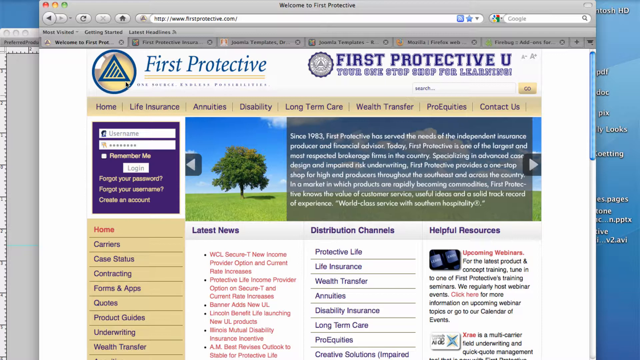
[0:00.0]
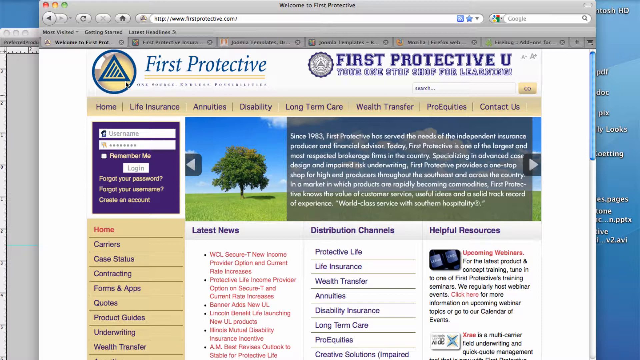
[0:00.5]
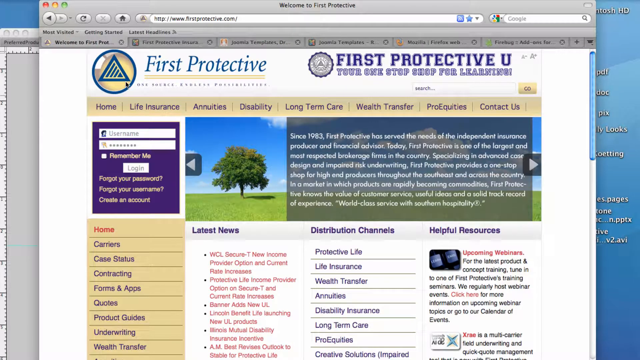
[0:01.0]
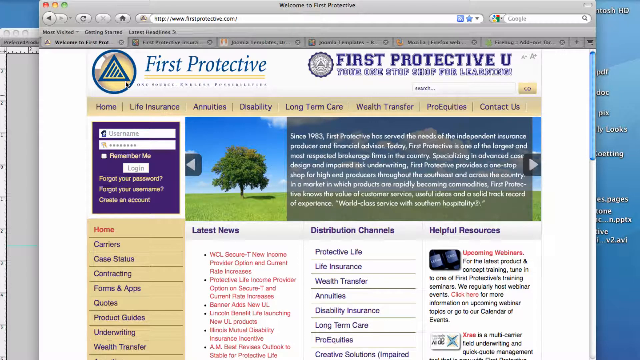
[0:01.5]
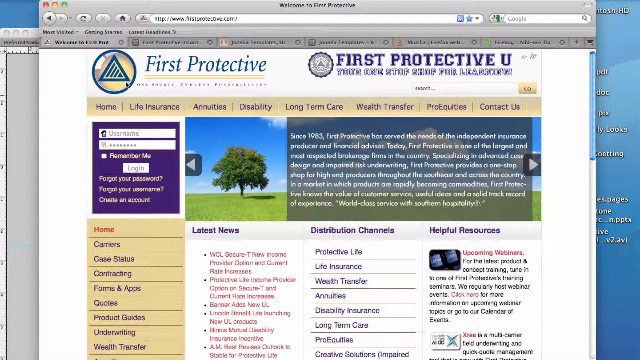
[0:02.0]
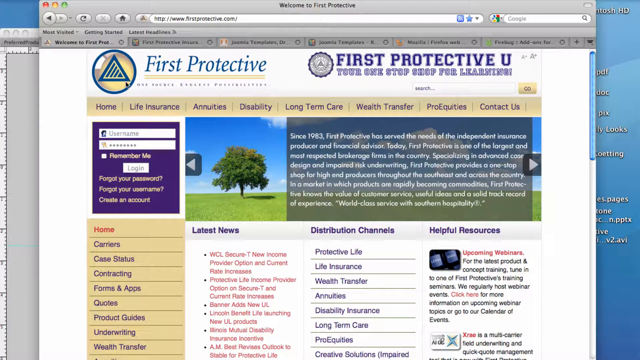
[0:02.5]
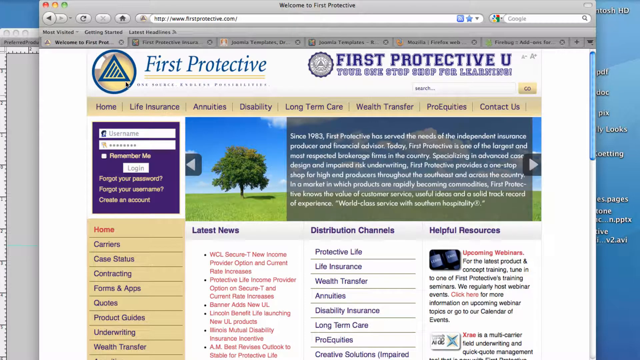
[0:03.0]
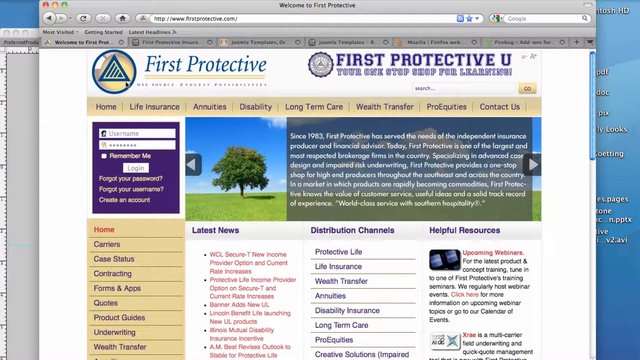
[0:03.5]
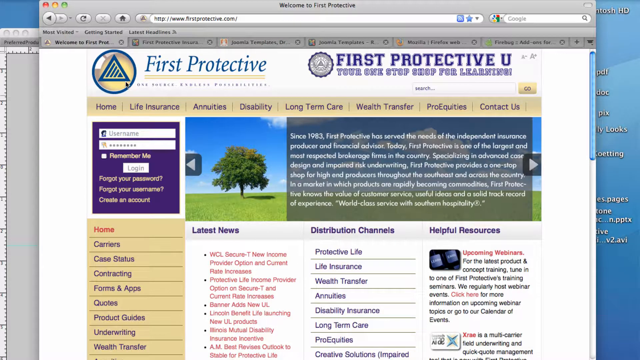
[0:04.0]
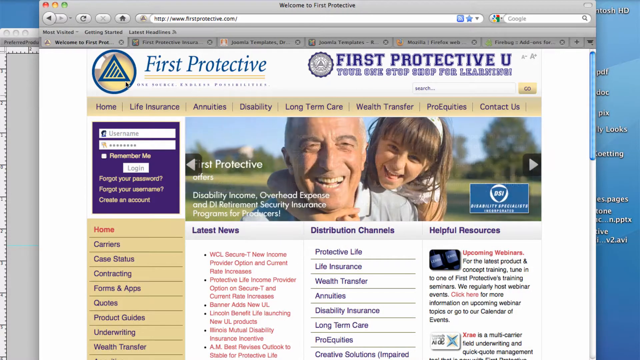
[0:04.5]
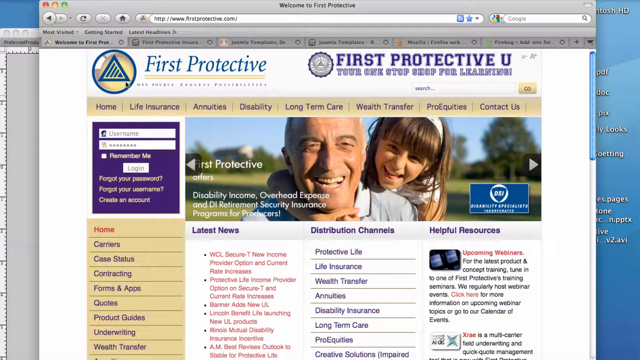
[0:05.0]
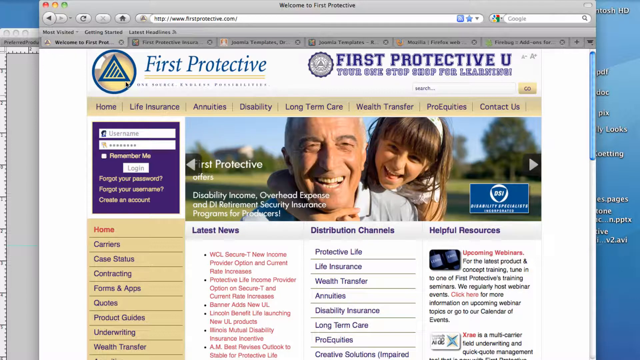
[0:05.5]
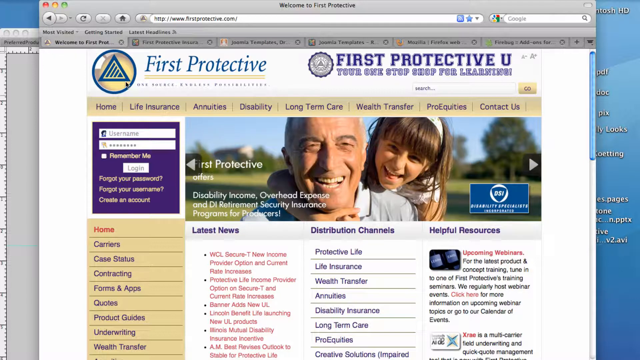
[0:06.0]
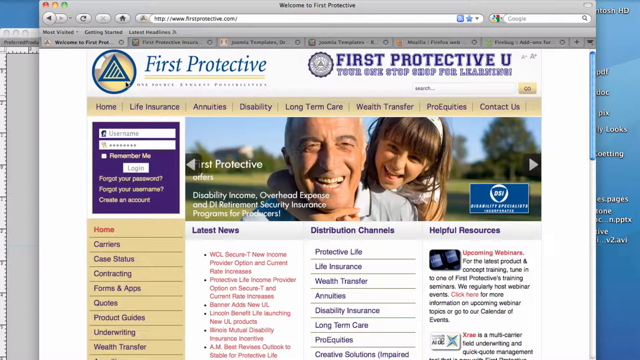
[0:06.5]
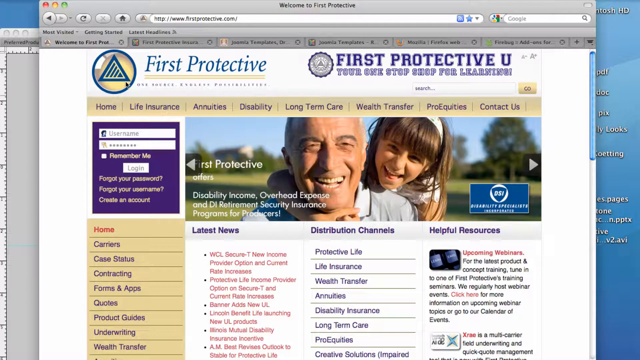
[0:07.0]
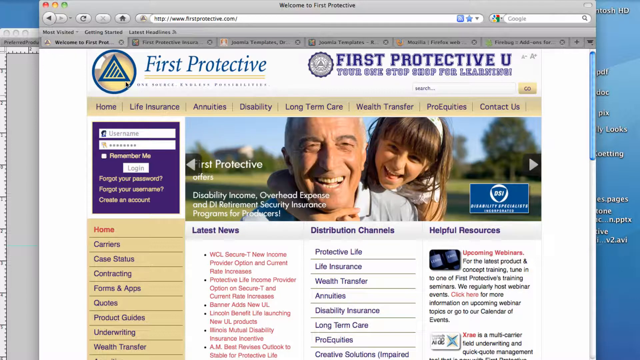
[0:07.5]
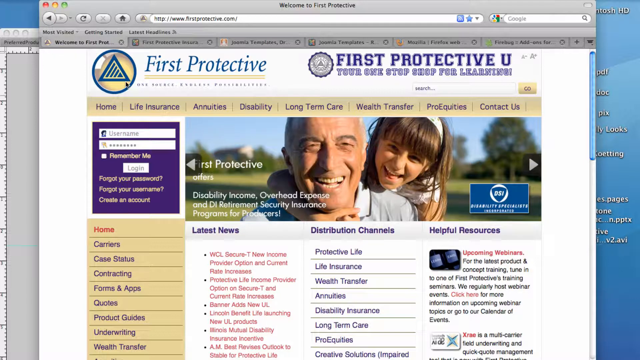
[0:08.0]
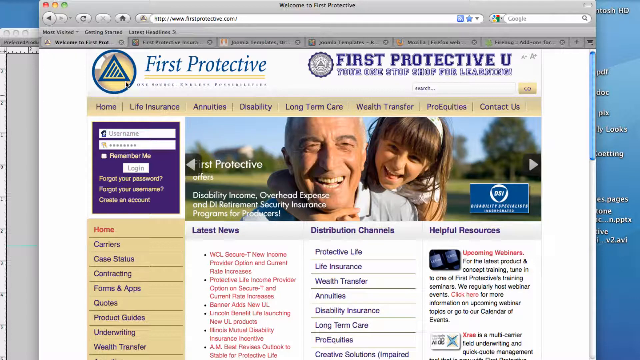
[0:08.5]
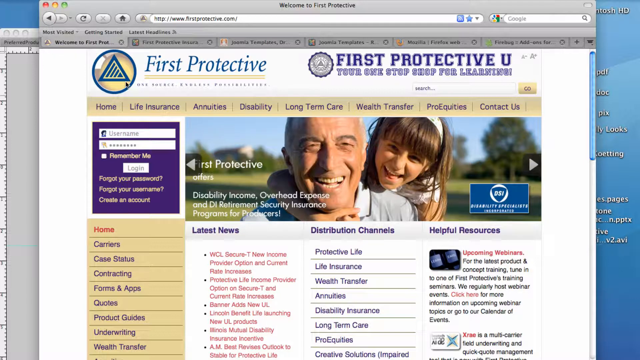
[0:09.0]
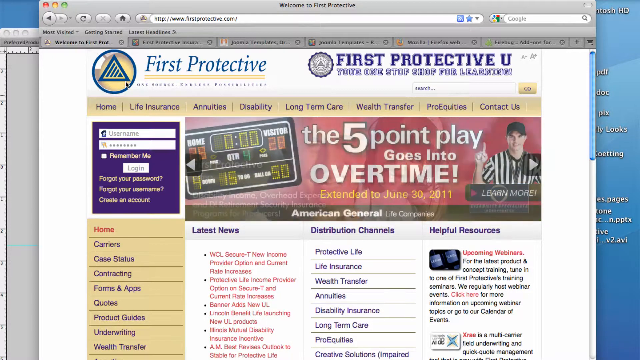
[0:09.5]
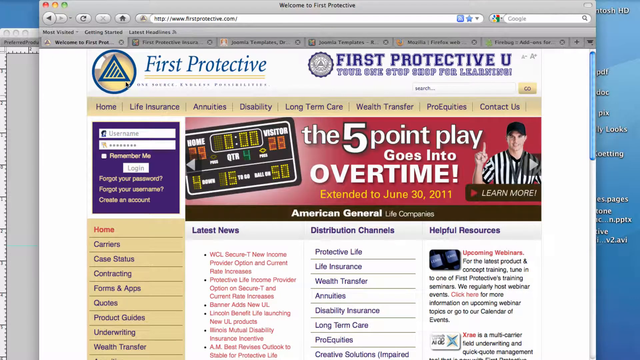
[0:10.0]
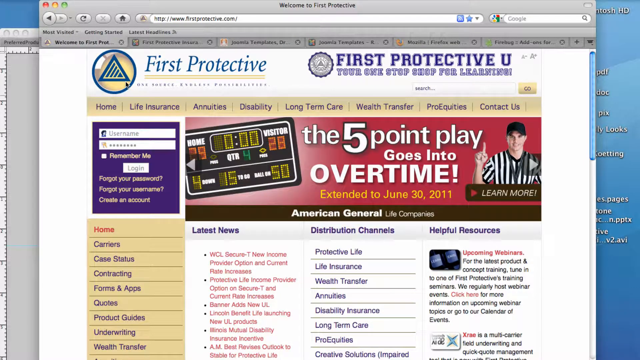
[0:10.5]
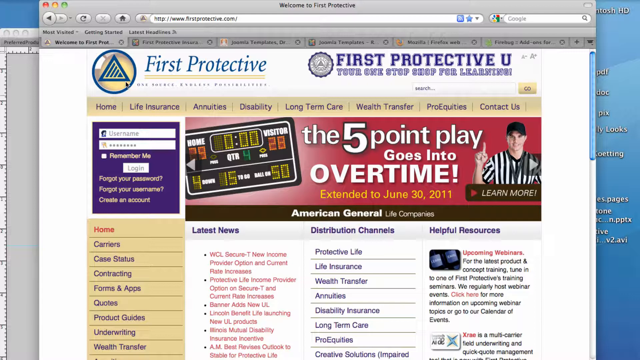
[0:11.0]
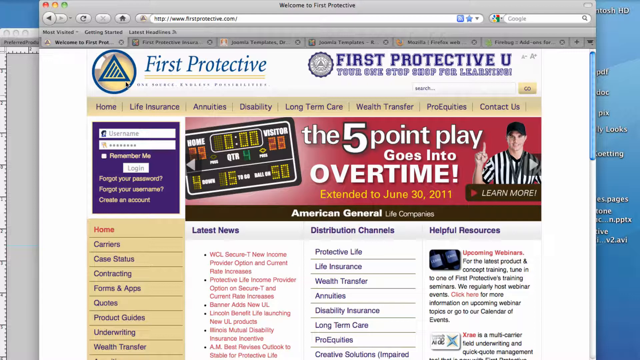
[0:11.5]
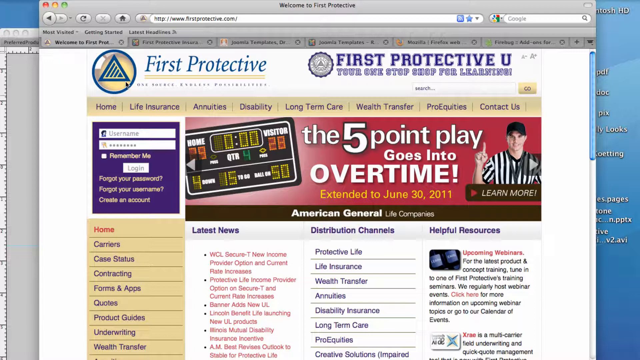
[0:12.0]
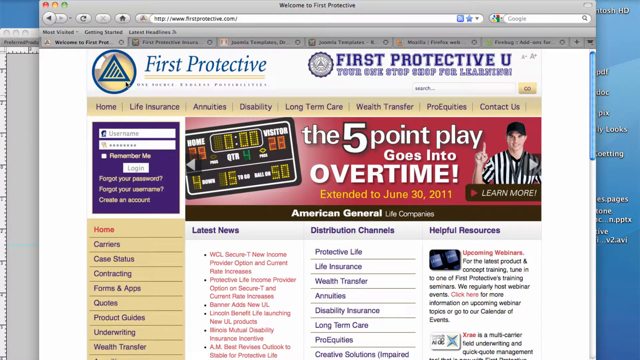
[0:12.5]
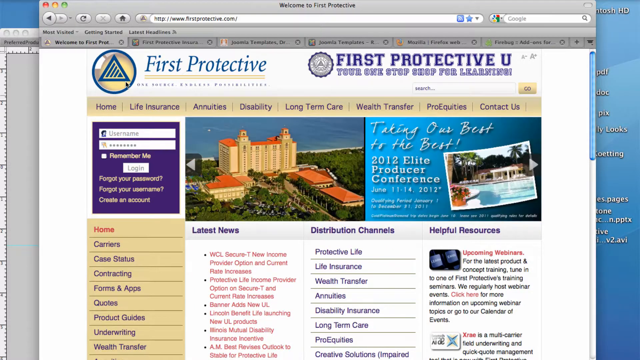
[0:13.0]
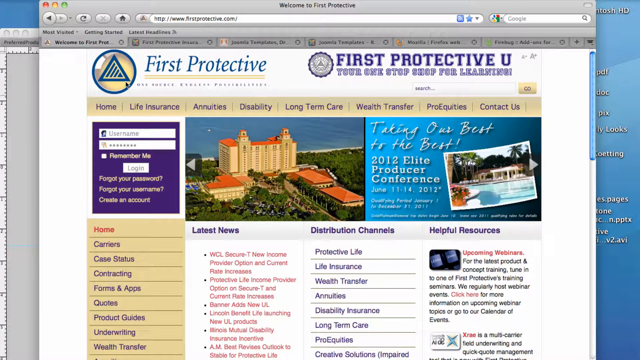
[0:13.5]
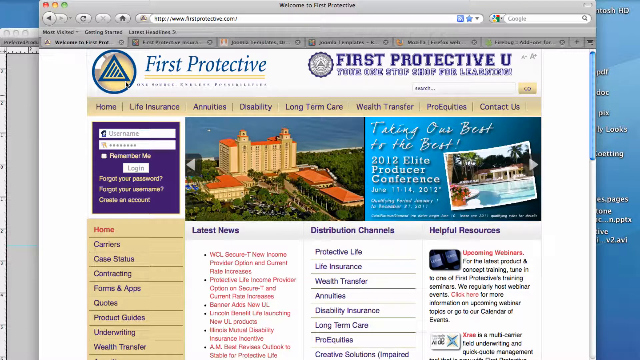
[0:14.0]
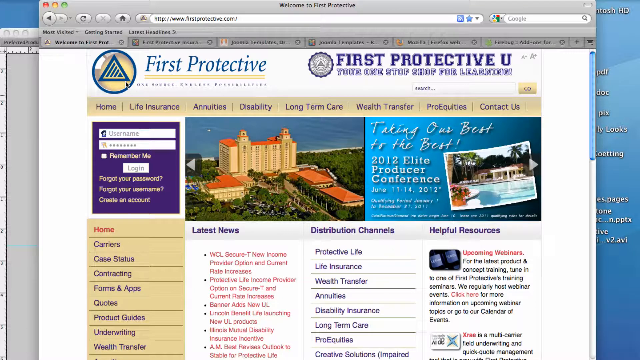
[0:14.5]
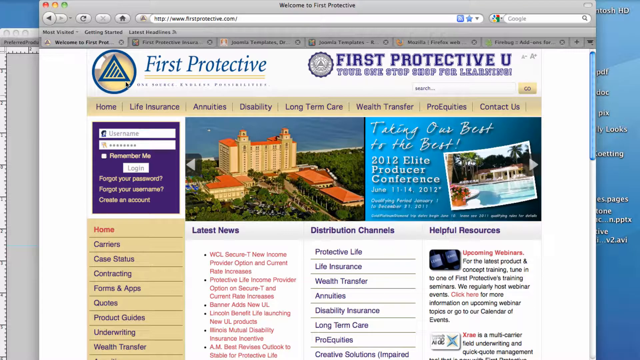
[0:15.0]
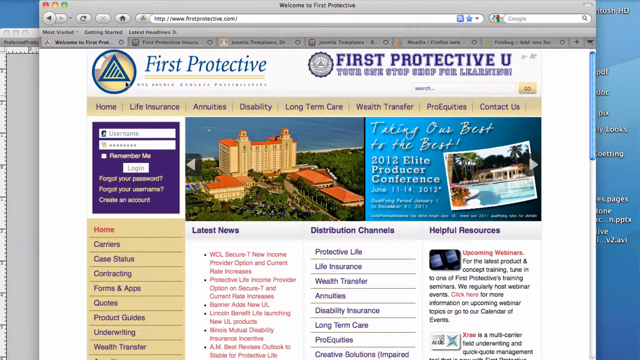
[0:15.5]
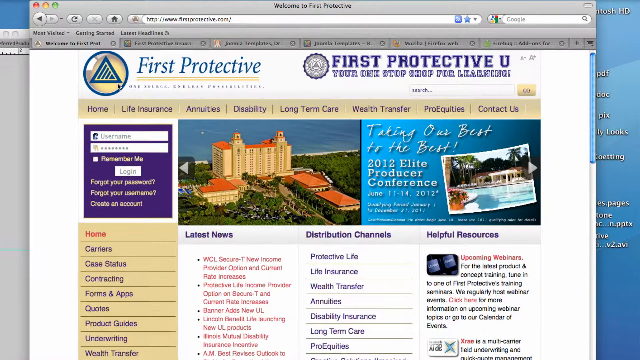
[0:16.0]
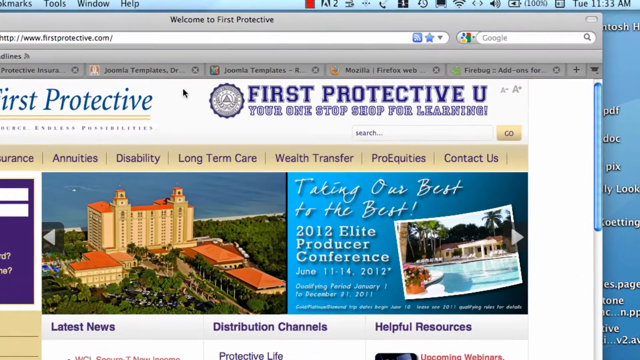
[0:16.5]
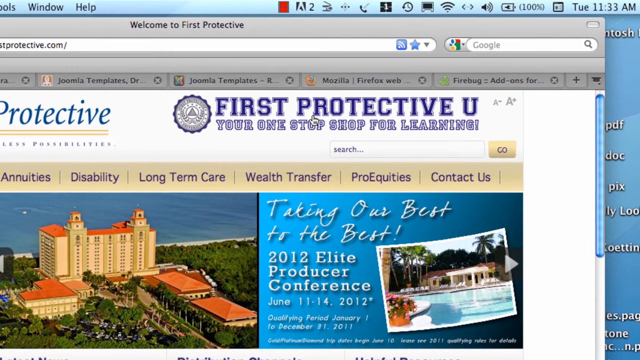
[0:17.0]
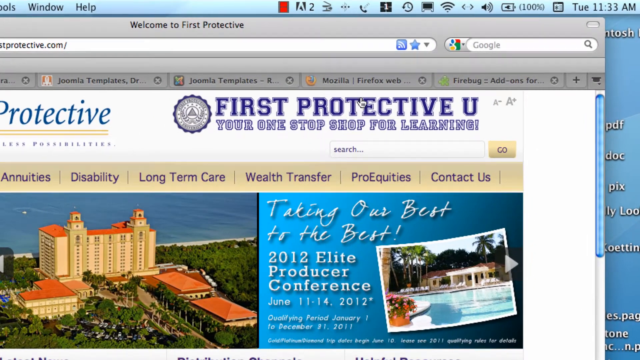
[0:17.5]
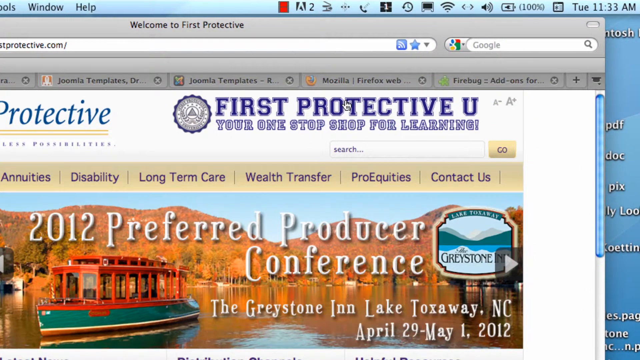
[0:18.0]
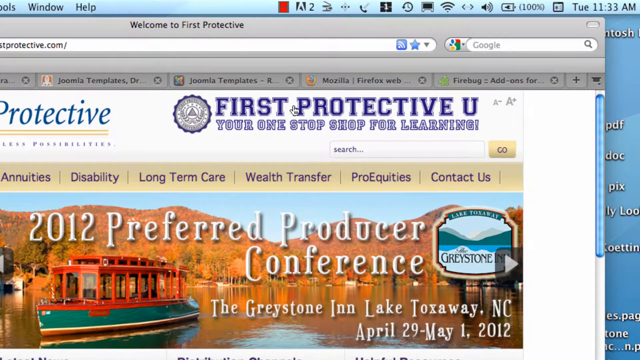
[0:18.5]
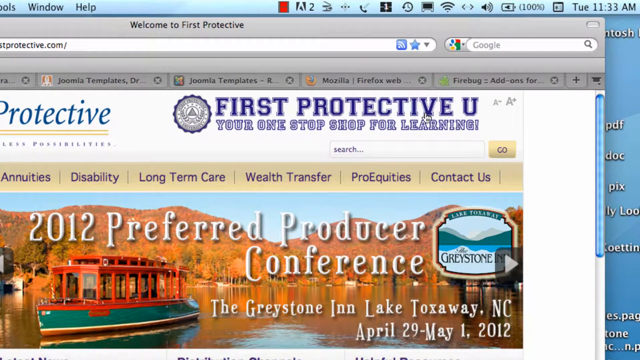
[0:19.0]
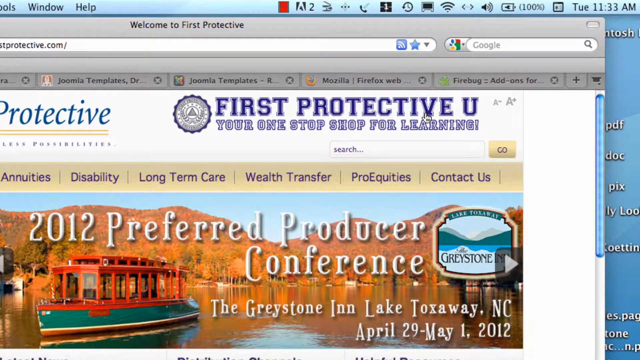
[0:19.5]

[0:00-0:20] The video opens on a web page on a Macintosh computer, shown in the Safari browser with the default search engine set to google.com. The website is firstprotective.com. In the top left-hand corner there is a triangle symbol with the words "First Protective" next to it. To the right of that is another symbol that also says "First Protective," along with text ending in "shop for learning." Beneath it is a gold banner reading "home, life insurance, annuities, disabilities, long-term care, wealth transfer, ProEquits, contact us." Below that is a login form with username and password fields, a login button beneath it, and beneath that the links "Forgot Your Password," "Forgot Your Username" and "Create an Account." Next to the form is a picture of a tree in a grass field with a blue sky.